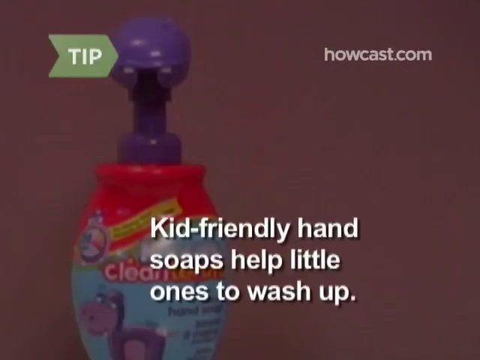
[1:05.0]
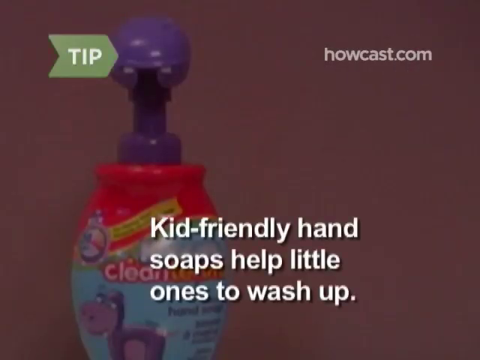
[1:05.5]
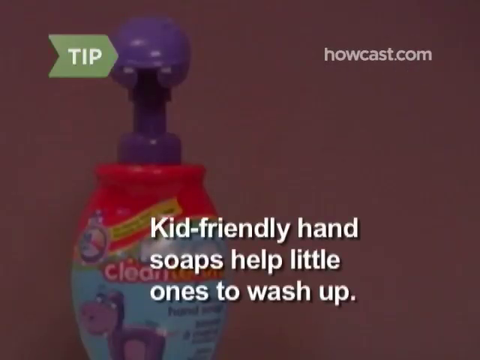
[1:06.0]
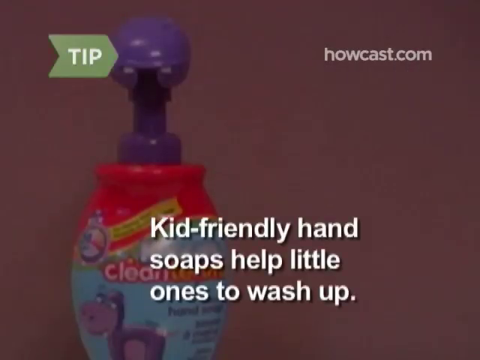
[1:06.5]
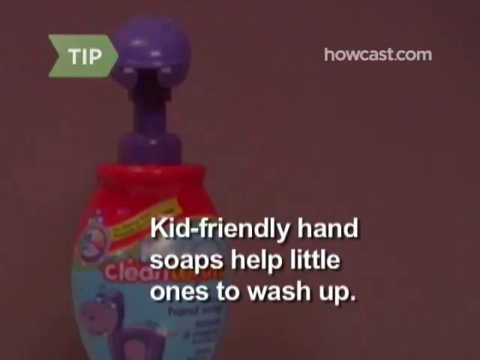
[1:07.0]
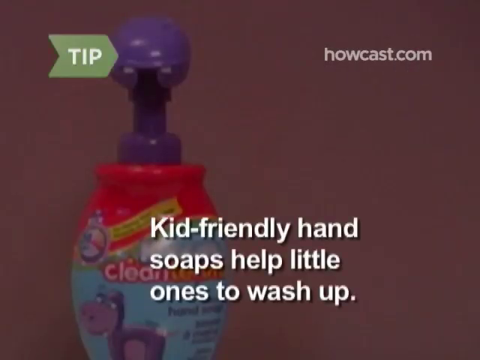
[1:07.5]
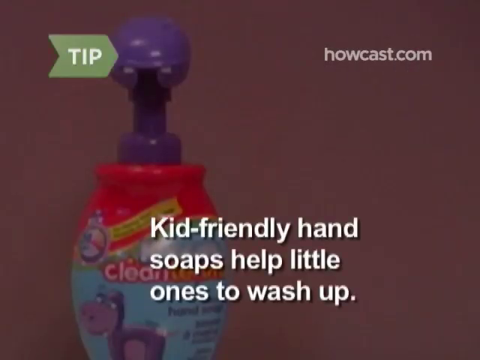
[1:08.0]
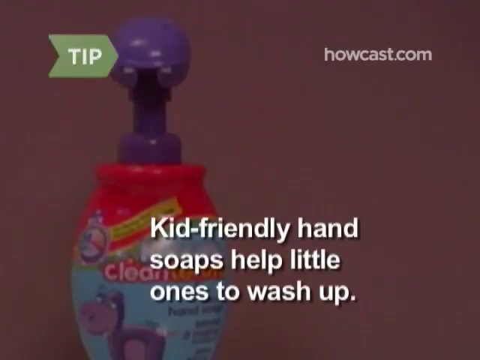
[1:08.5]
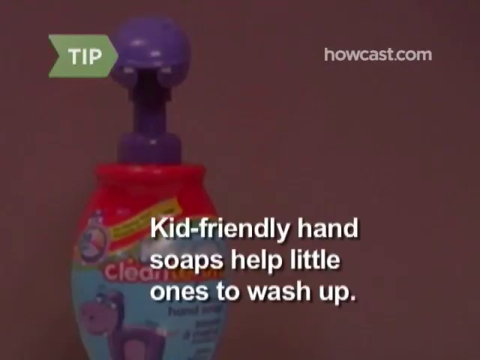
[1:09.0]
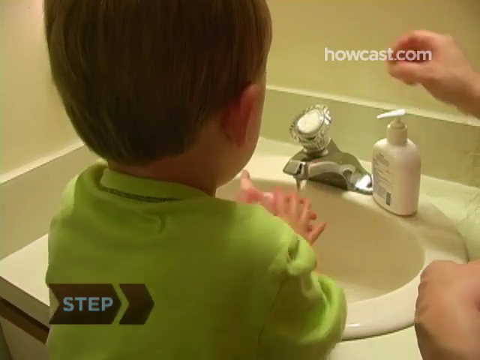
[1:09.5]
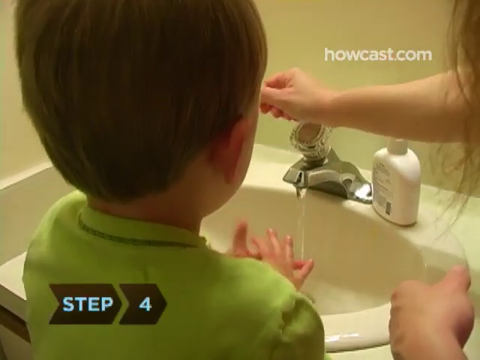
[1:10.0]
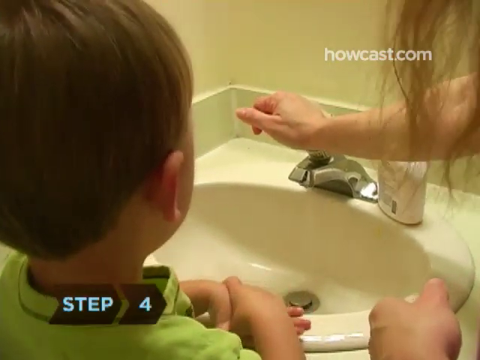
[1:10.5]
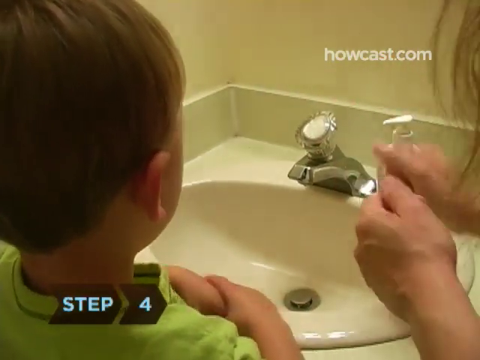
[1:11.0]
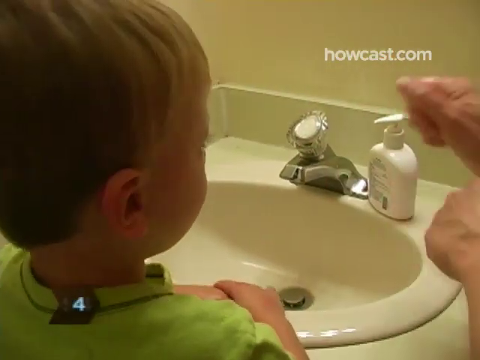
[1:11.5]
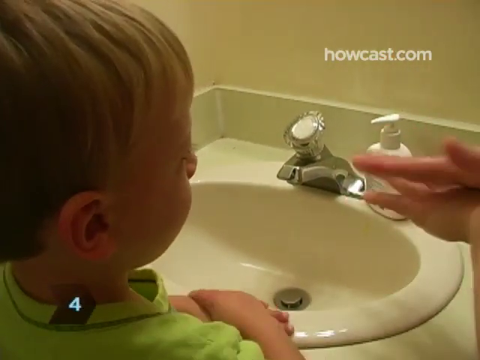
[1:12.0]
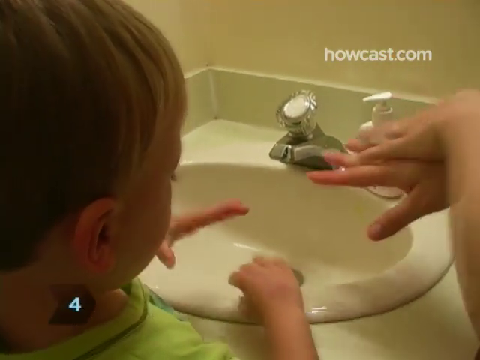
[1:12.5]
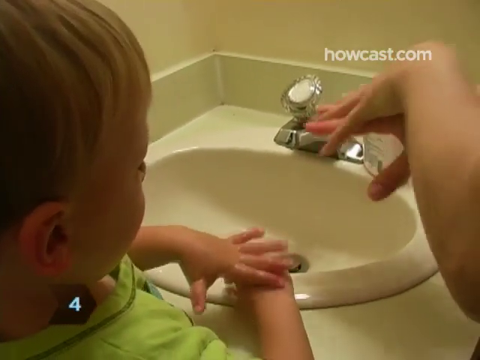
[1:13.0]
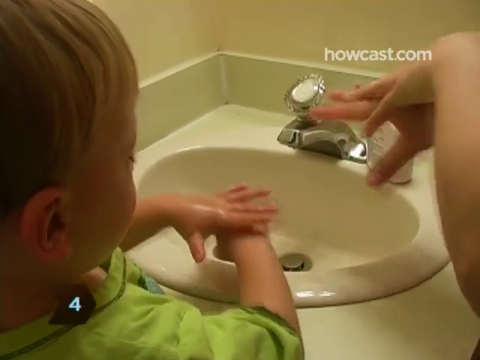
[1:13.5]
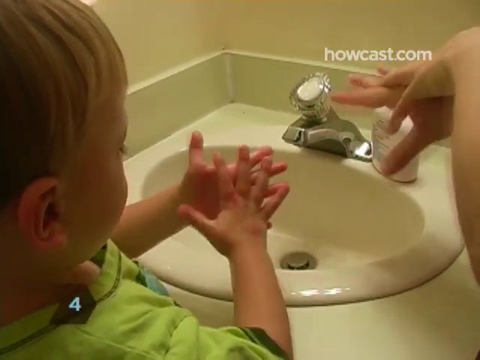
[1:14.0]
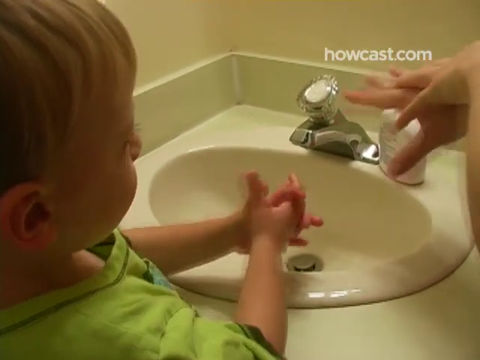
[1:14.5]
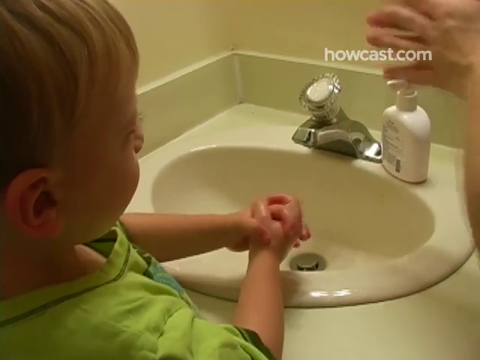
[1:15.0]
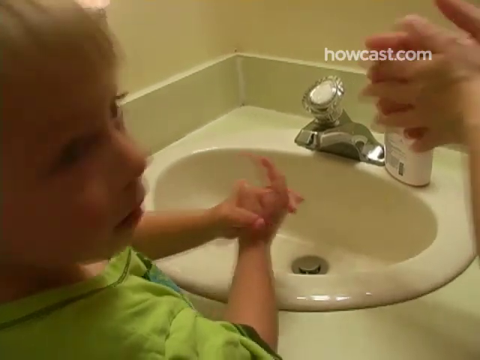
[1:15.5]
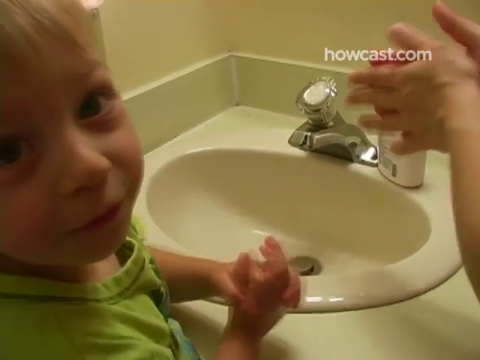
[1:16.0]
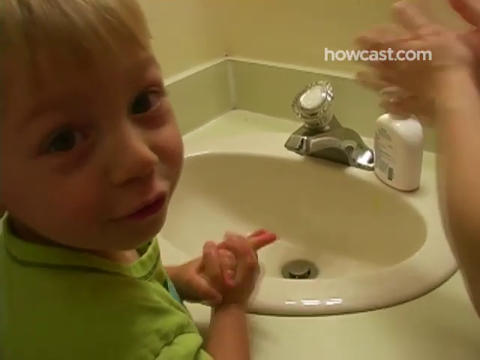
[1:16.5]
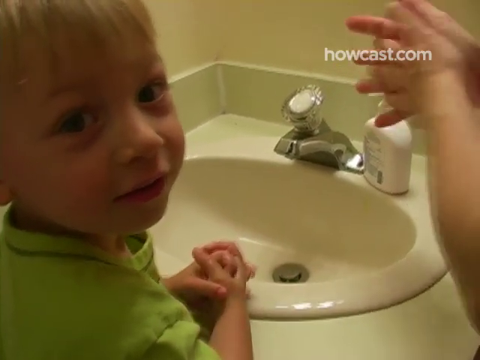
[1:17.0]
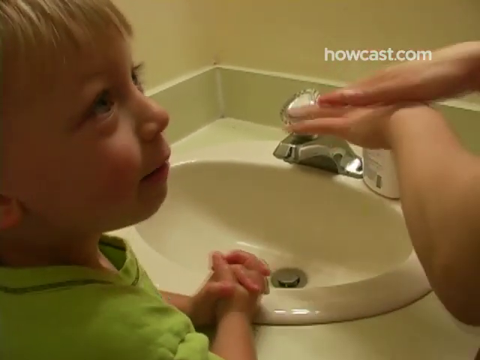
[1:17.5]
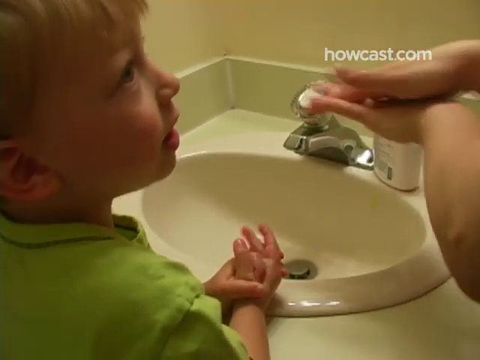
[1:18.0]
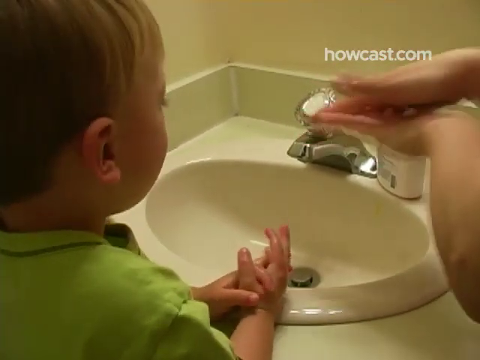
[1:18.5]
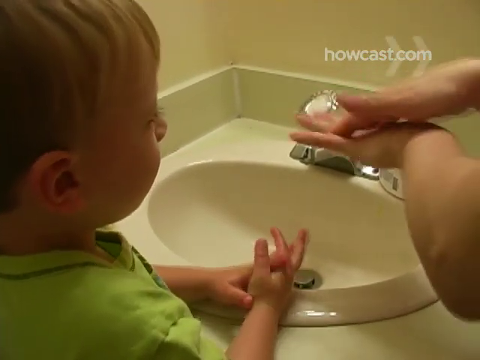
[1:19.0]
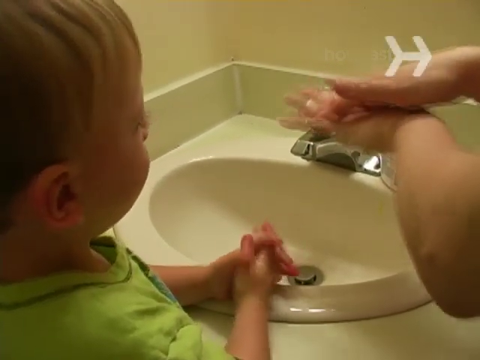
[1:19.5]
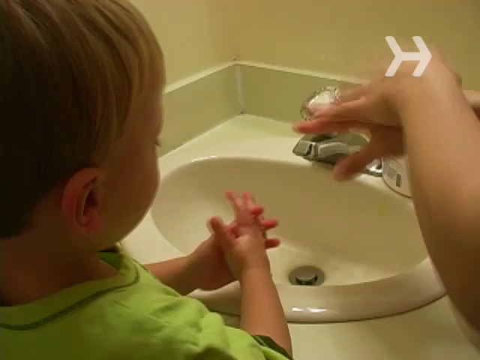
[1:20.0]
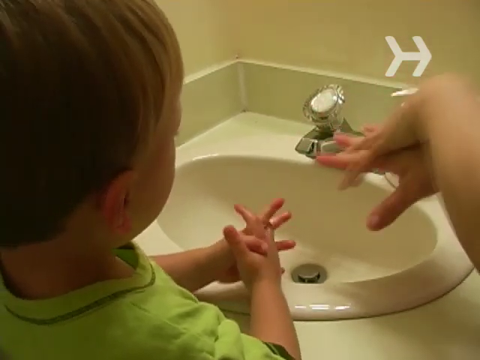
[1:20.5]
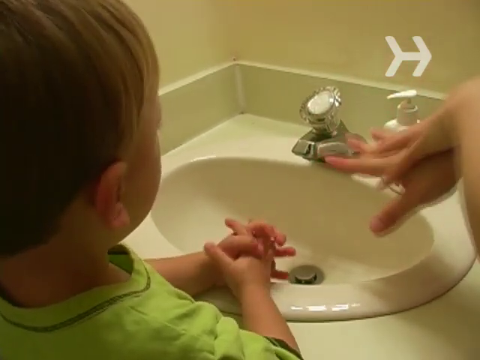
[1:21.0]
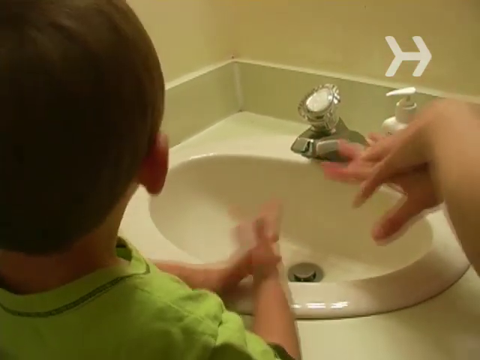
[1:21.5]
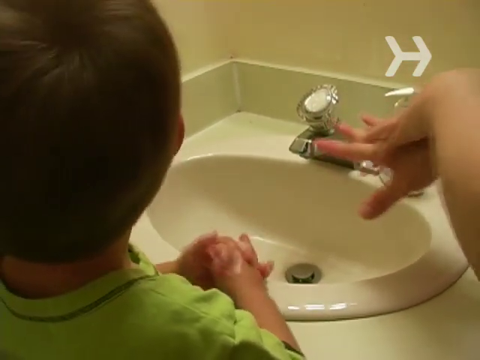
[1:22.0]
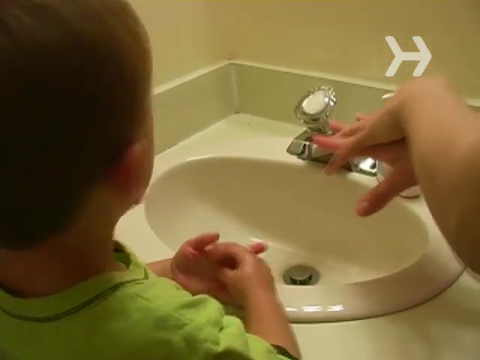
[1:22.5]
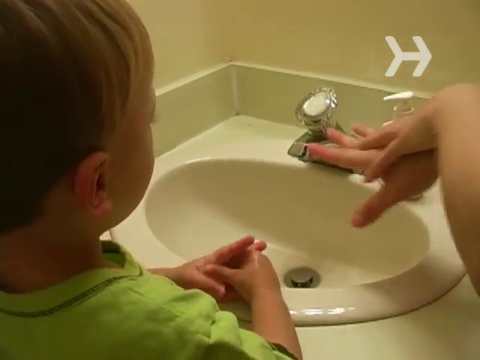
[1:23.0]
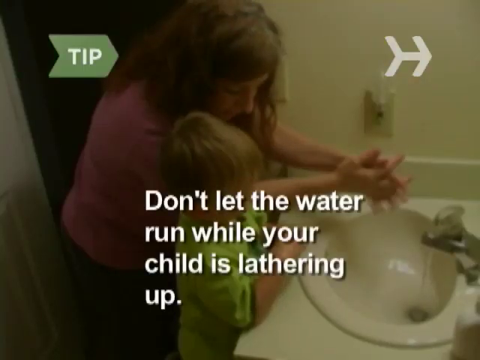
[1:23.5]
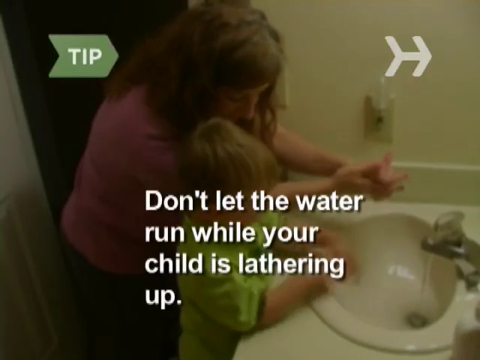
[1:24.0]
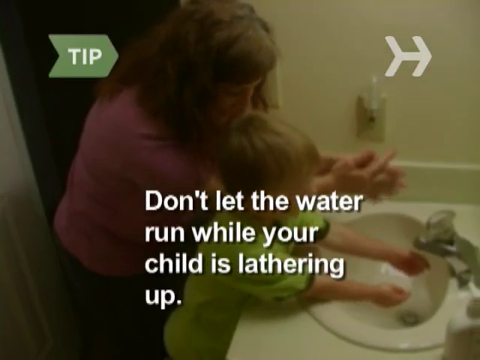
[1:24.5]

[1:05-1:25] The mother turns the water off. Overlay text on the screen reads "do not let the water run while your child is lathering up." The mother seems to lead by example, showing him how to spread the liquid soap all over the front and back of his hands, including between his fingers. The child loses focus and interacts with the father. He looks around the sink and moves his fingers back and forth between one another, kind of distributing the soap. It looks like this may be the child's first attempt.